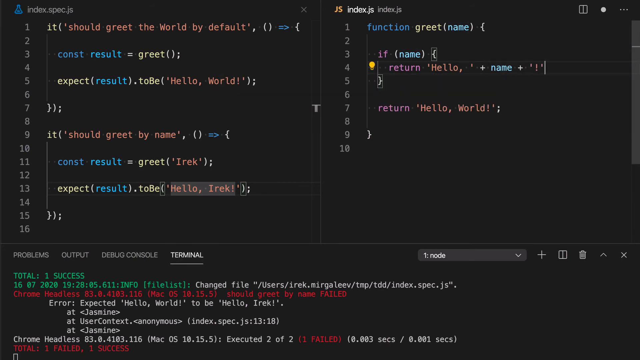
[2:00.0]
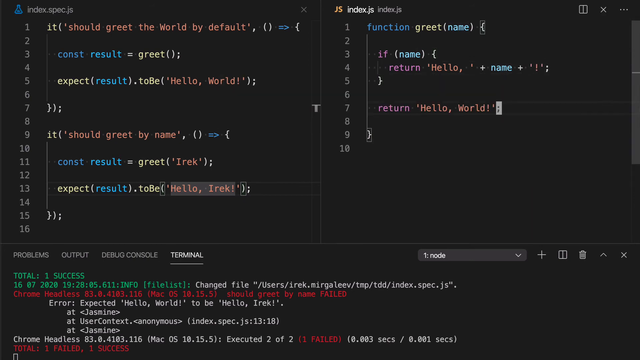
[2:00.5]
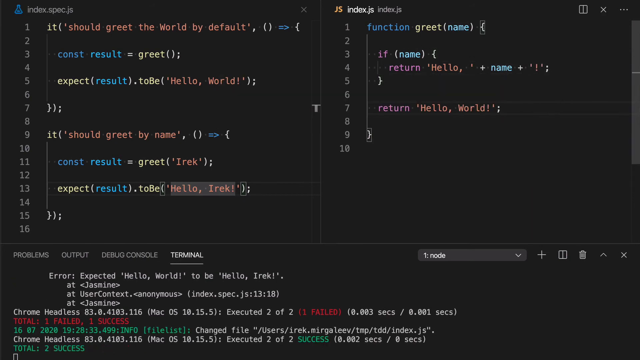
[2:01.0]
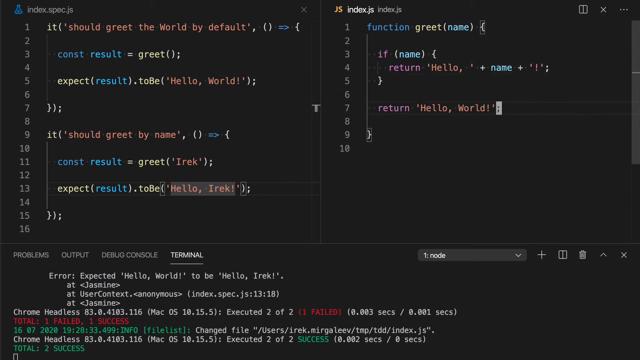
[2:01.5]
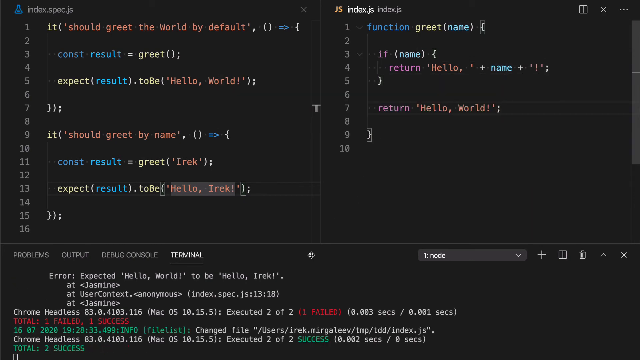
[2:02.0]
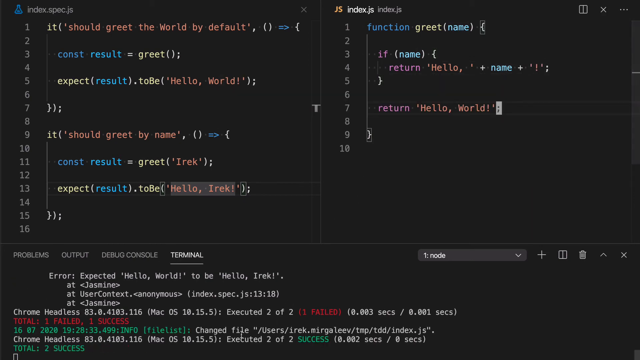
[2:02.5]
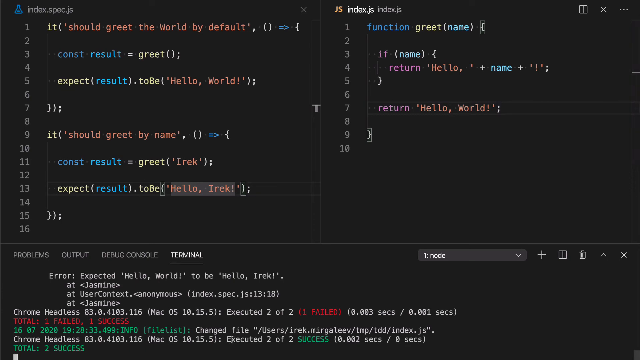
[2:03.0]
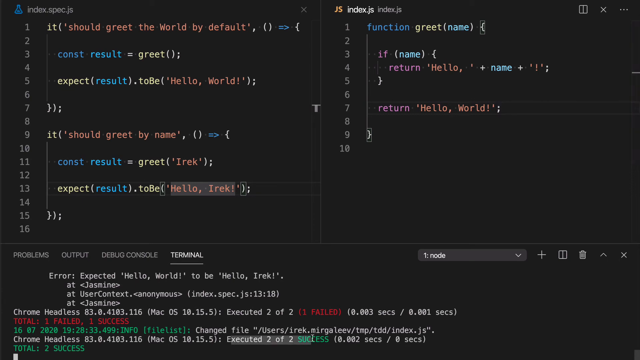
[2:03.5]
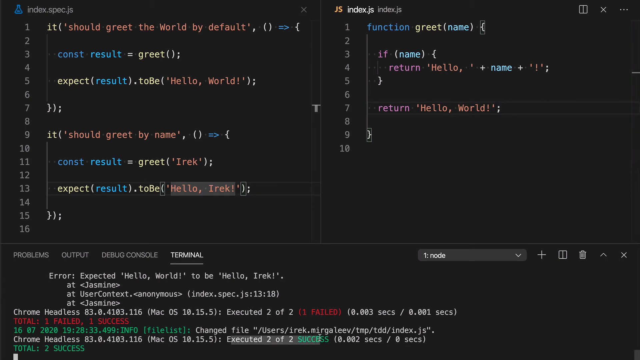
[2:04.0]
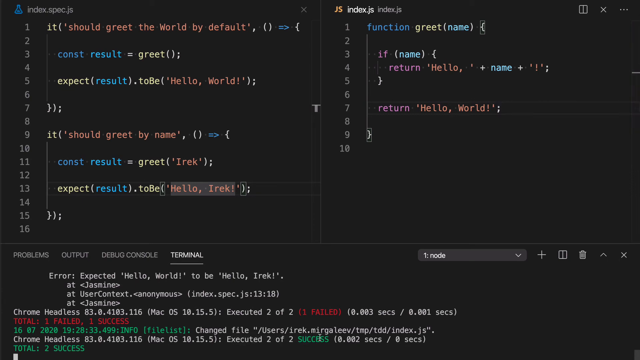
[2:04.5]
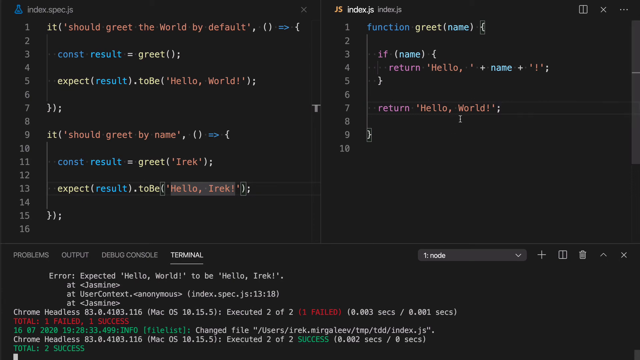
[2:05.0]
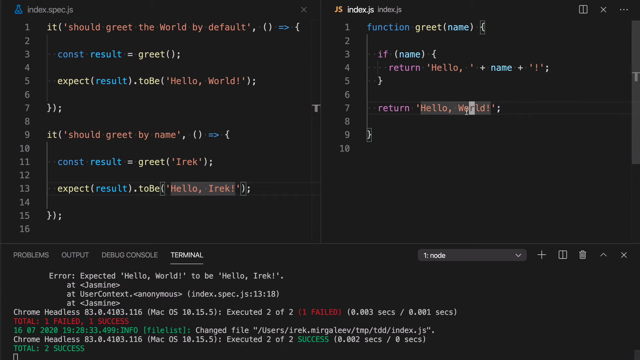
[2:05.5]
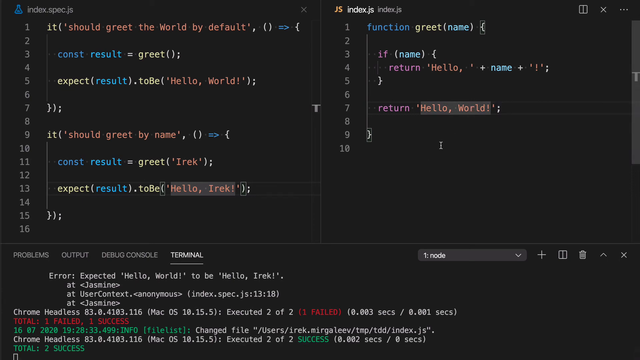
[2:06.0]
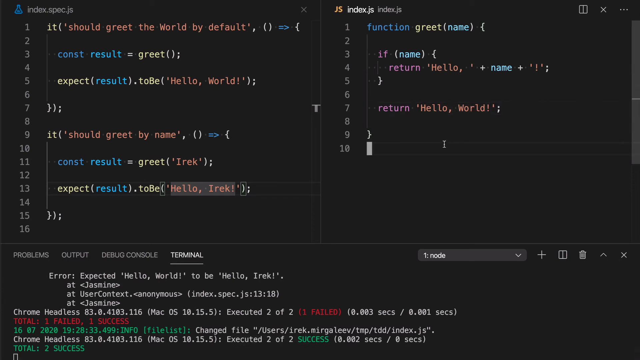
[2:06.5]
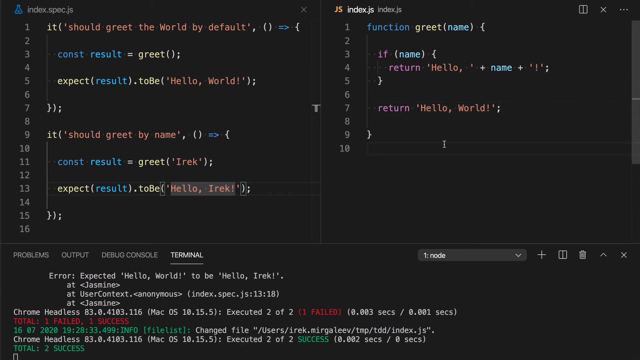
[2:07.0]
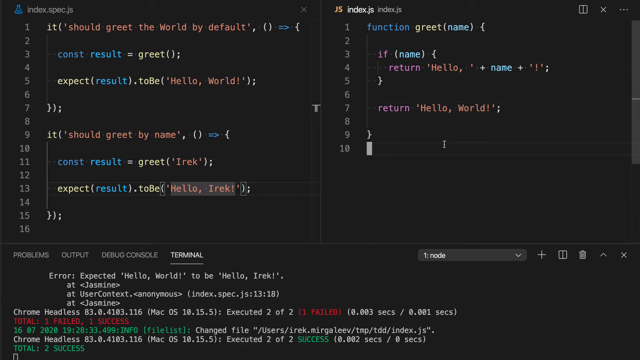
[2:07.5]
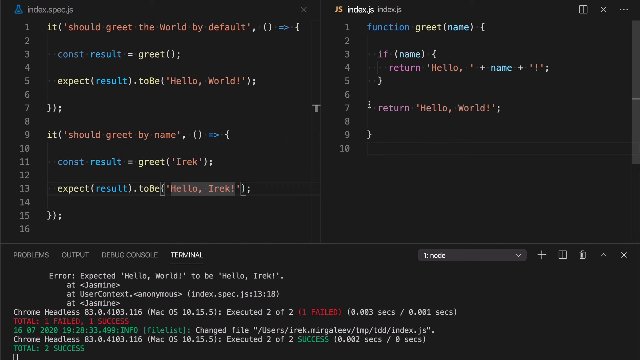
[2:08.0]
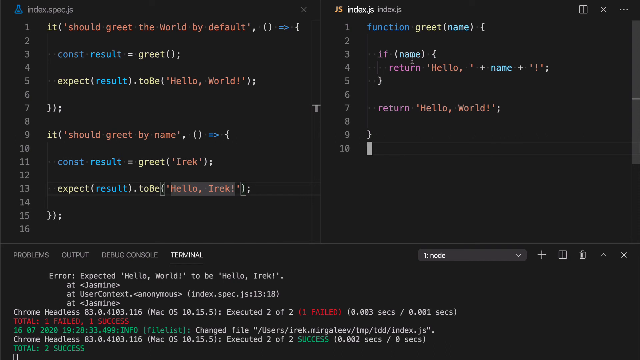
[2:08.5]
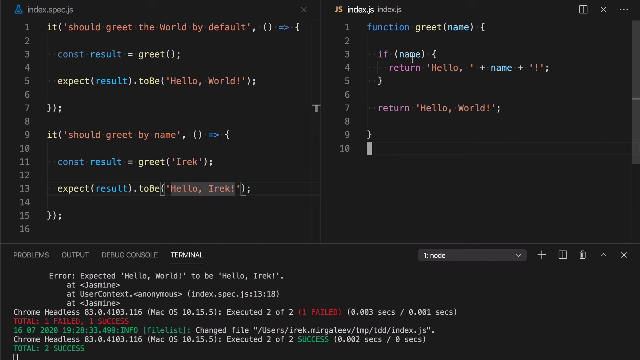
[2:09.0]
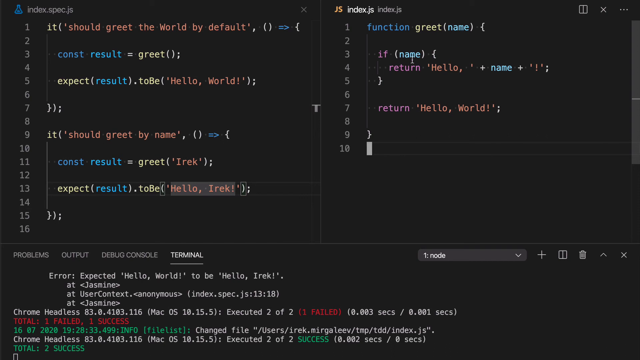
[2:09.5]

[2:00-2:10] The black screen shows code including "should greet the world by default", "construct result", "greet", "hello world", "should greet by name" and "hello IREK", in green, red, blue and yellow, as someone continues typing. "hello world" is highlighted. A yellow dot that looks like a light bulb is visible, and "JS" appears in yellow in the upper middle of the screen.